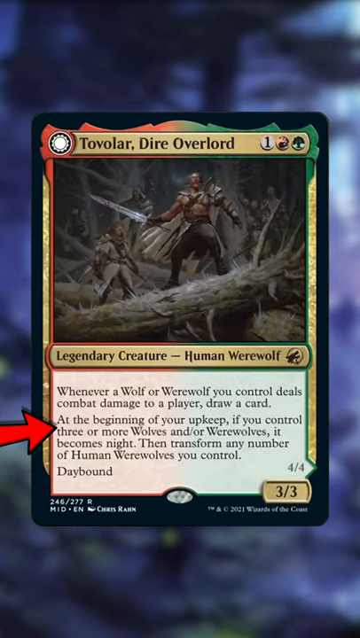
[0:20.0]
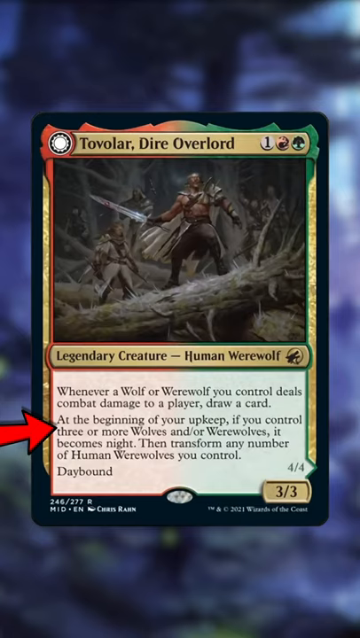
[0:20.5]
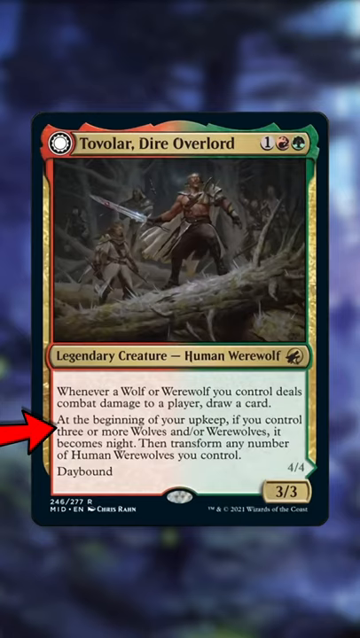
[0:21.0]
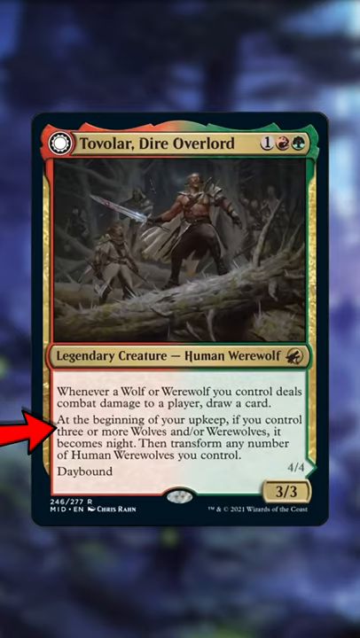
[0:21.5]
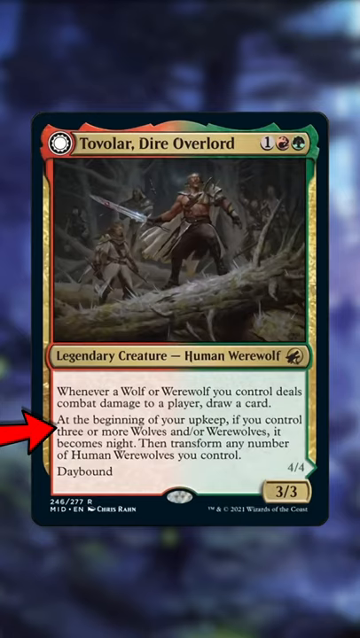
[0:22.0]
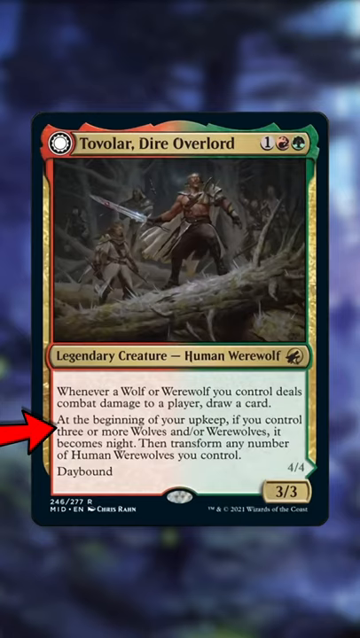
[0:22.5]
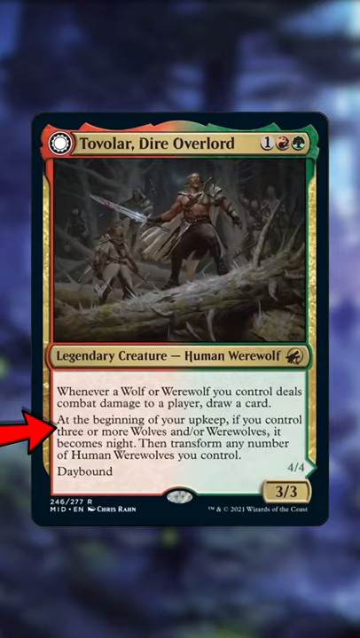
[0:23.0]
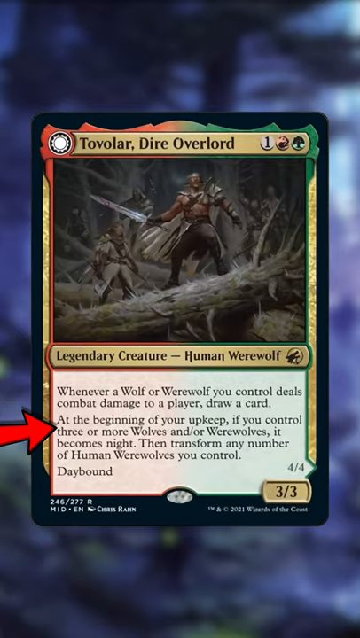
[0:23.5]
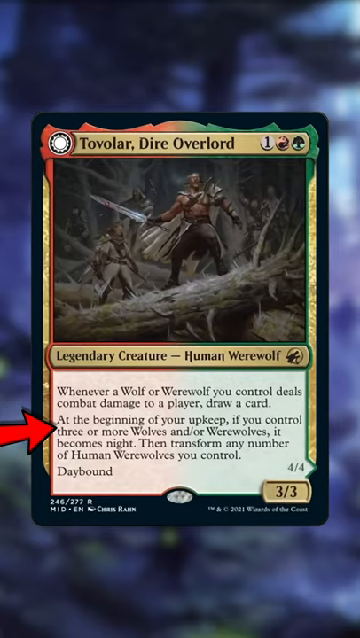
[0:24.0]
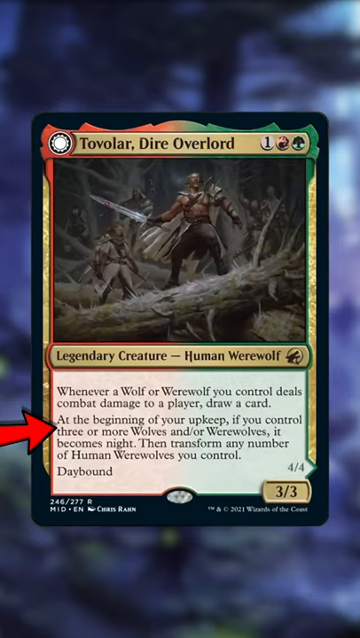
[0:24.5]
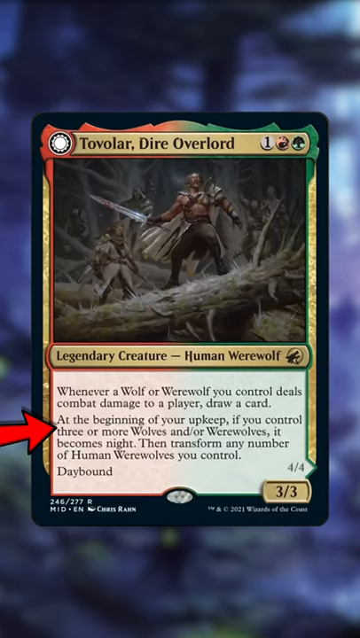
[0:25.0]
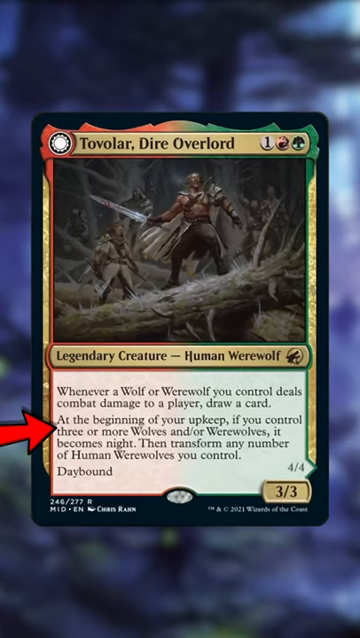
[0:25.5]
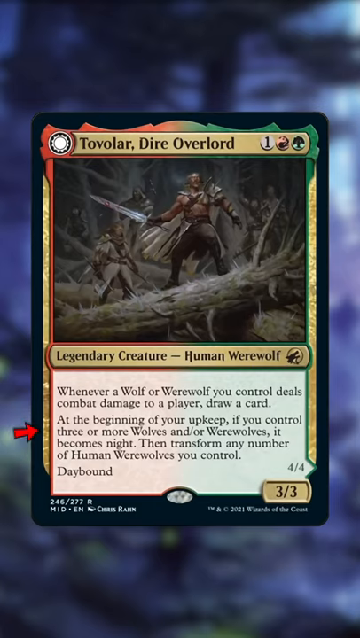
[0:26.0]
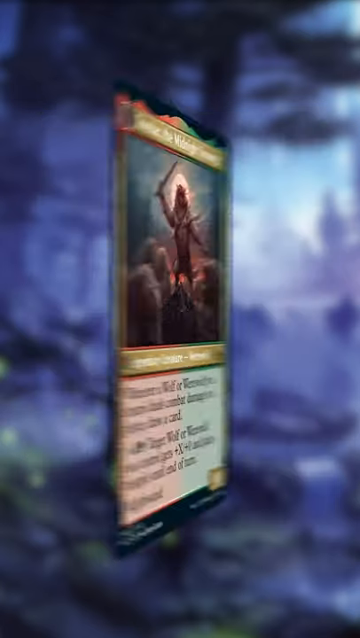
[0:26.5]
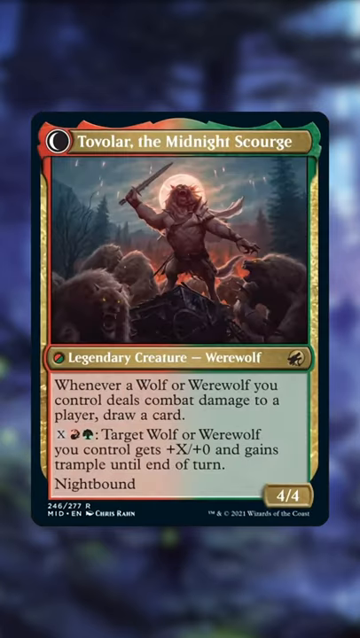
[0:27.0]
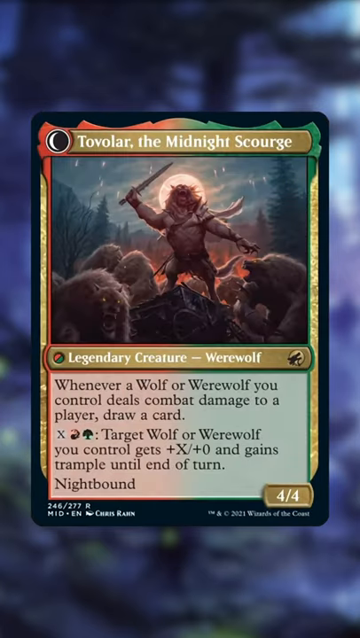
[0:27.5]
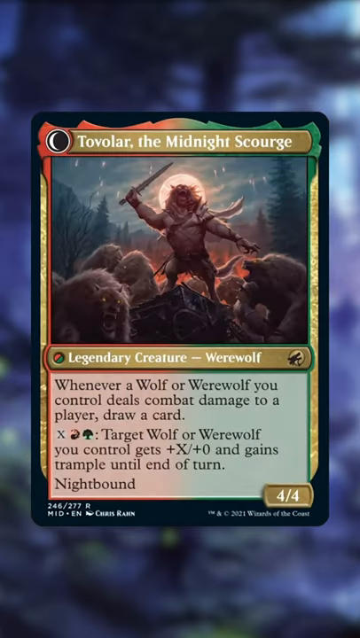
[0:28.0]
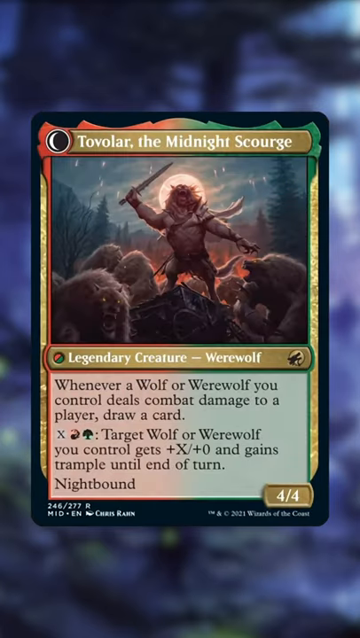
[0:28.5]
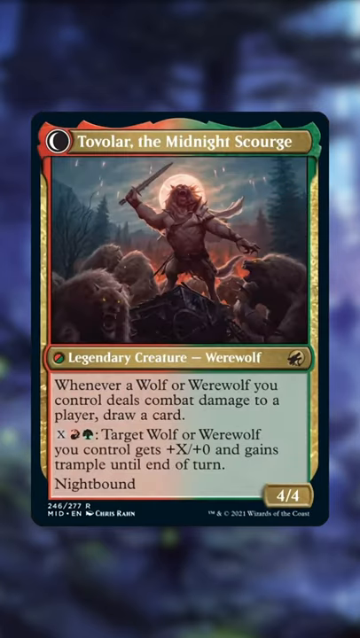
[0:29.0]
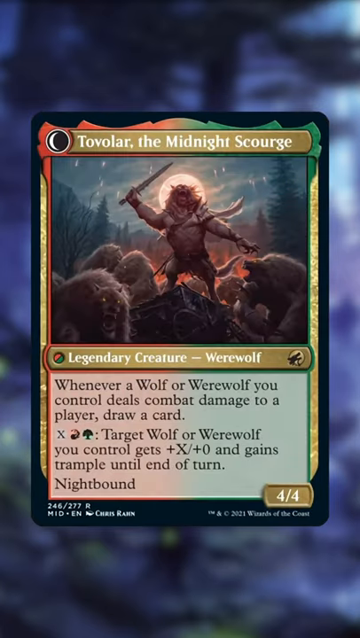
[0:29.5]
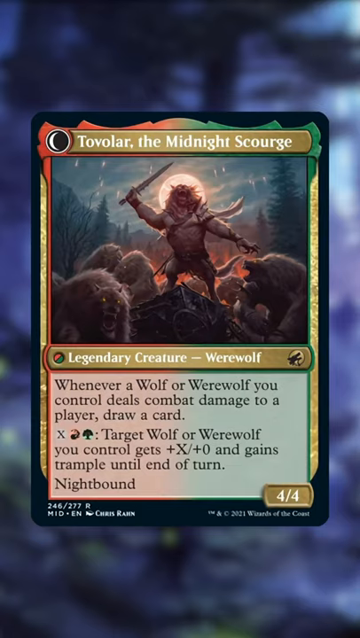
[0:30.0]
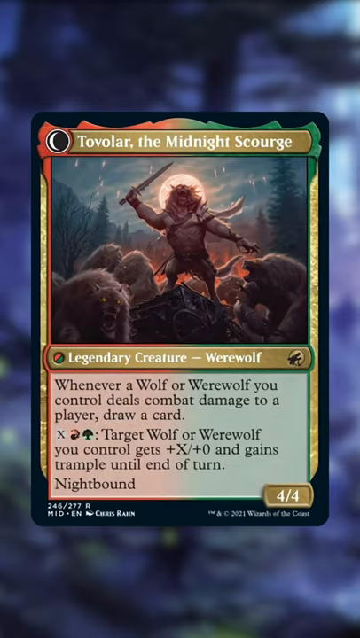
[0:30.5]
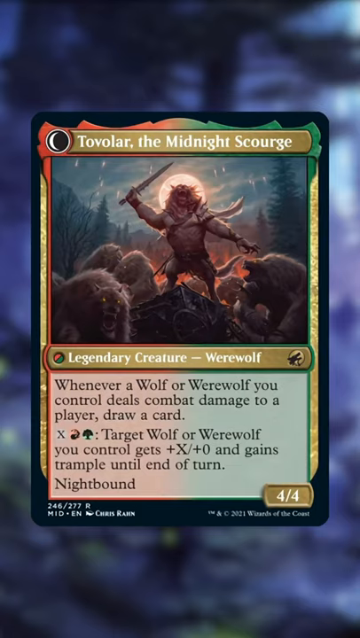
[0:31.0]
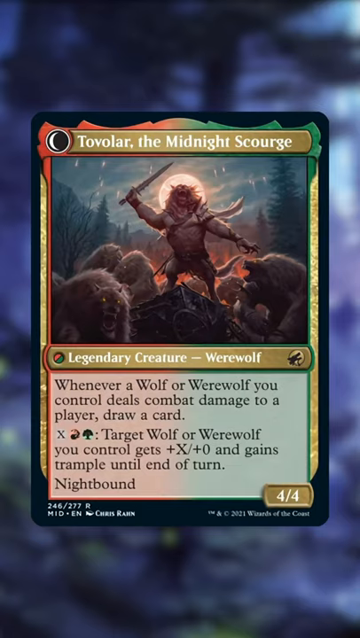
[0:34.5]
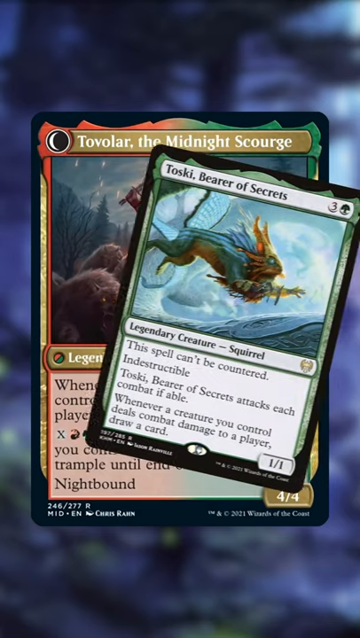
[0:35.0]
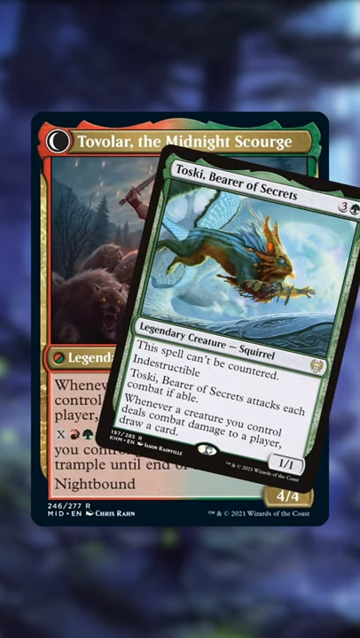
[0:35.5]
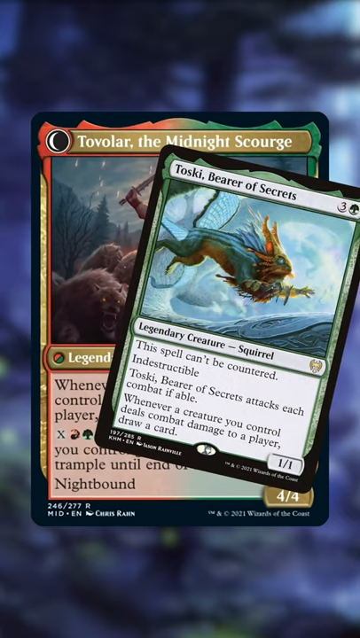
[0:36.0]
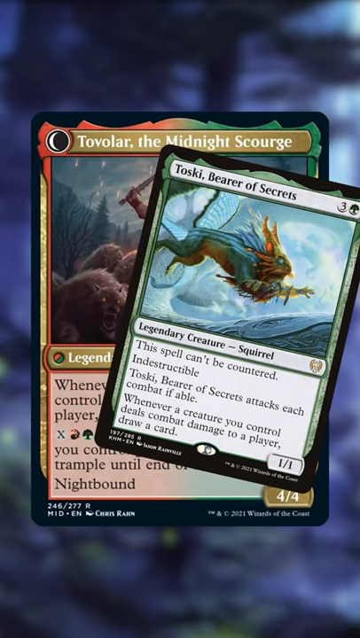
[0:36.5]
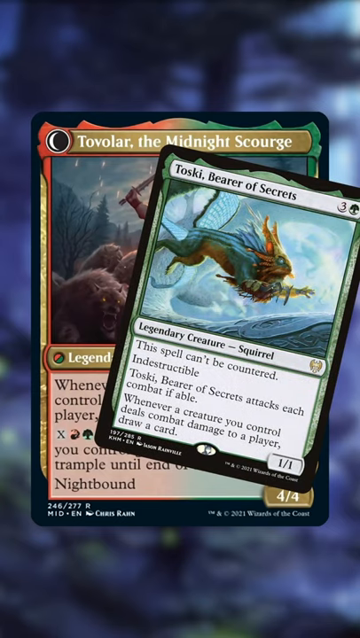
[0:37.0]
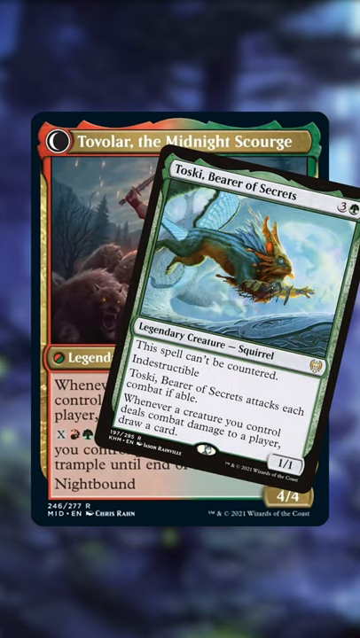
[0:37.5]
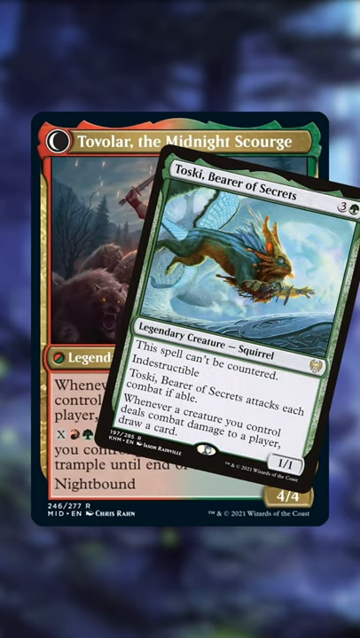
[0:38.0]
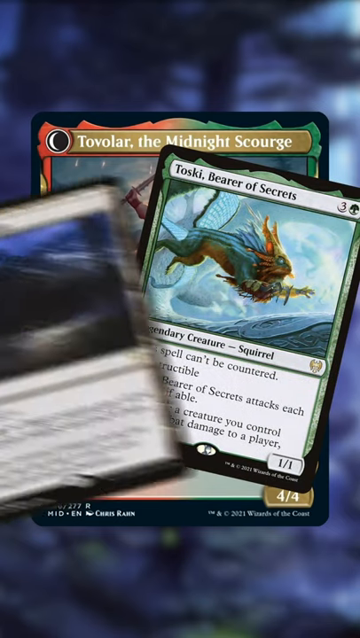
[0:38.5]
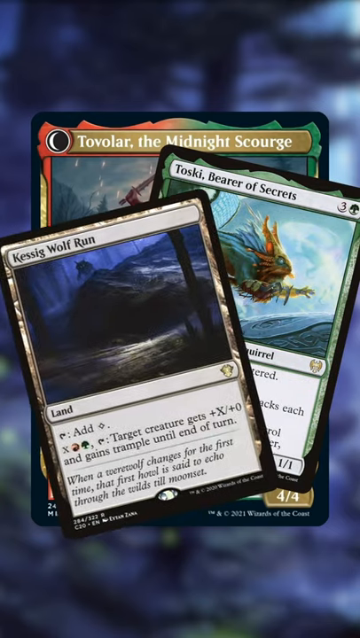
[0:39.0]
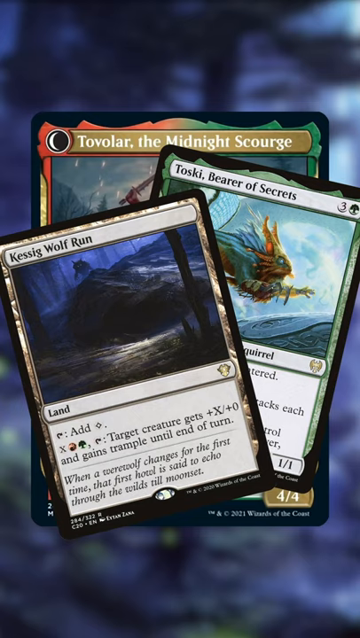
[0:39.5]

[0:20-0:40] The Tul'Avar Dire Overlord card remains on screen with a red arrow pointing to it, then the card flips to show Tul'Avar the Midnight Scourge, also a legendary werewolf creature. Its text reads "Whenever a wolf or werewolf you control deals combat damage to a player, draw a card." X, fire and earth mana symbols follow, then "Target wolf or werewolf you control gets plus X/plus zero" and "gains trample until end of turn," with "four of four." Another card then appears on top of it from the right side, a black card with a green border reading "Toski, Bearer of Secrets," with a three and the green earth mana. Its art shows some sort of fish-like person with wings flying through the sky. It reads "Legendary creature, Squirrel," and underneath, "this spell can't be countered," "indestructible," "Toski, Bearer of Secrets attacks each combat if able," "Whenever a creature you control deals combat damage to a player, draw a card," and "one/one." Another card, Kessig Wolf Run, then appears on top of that one.